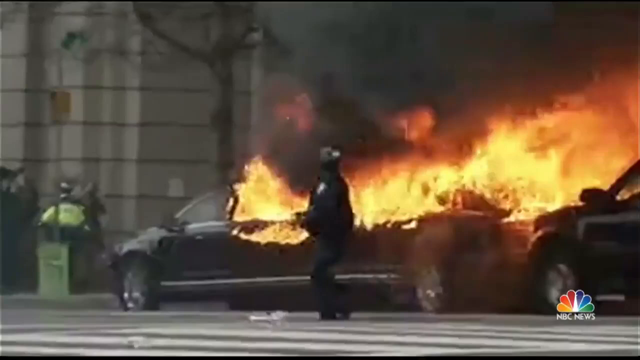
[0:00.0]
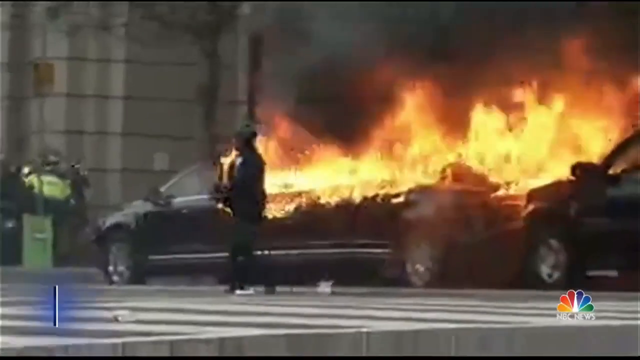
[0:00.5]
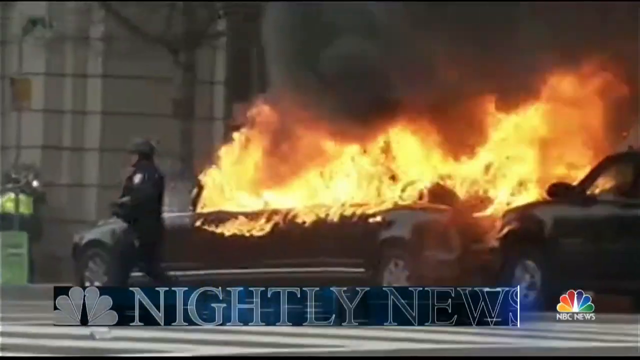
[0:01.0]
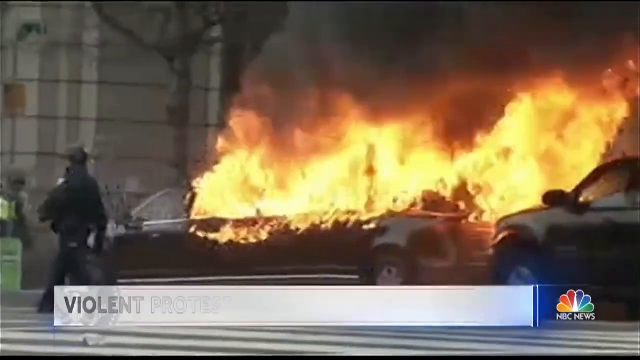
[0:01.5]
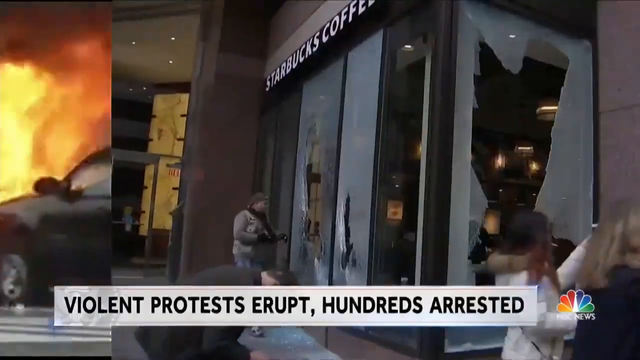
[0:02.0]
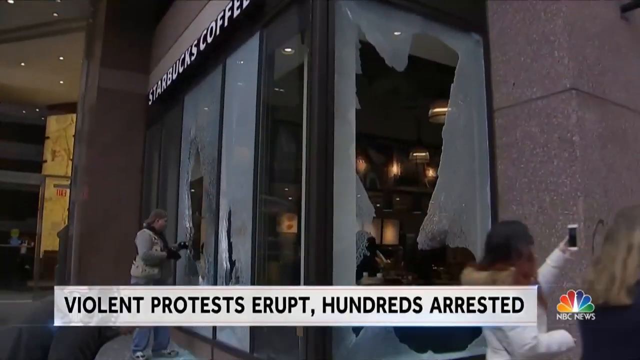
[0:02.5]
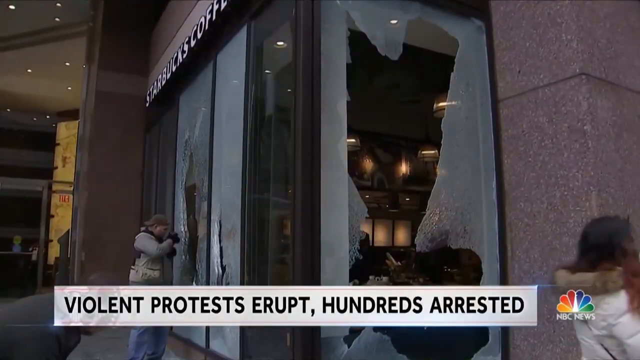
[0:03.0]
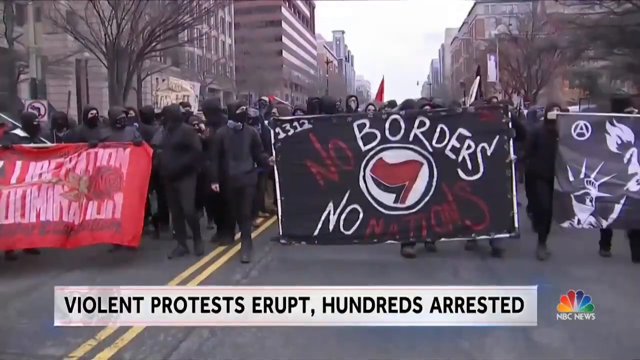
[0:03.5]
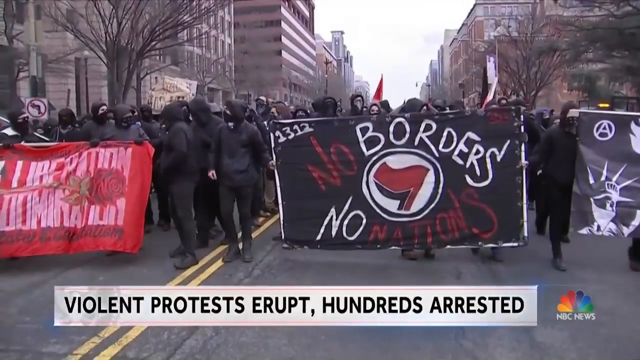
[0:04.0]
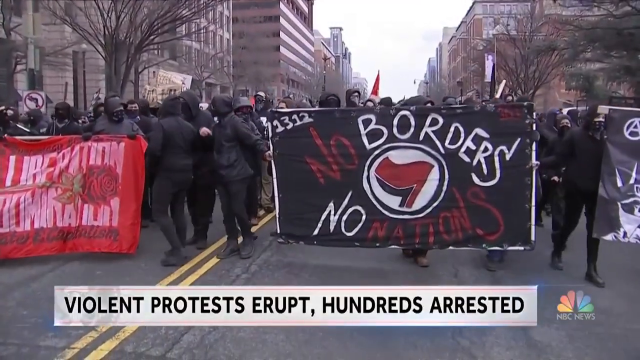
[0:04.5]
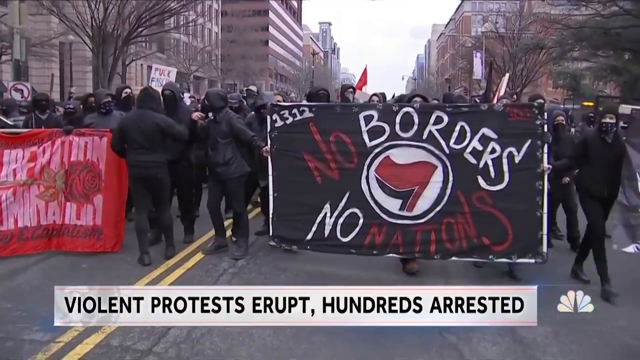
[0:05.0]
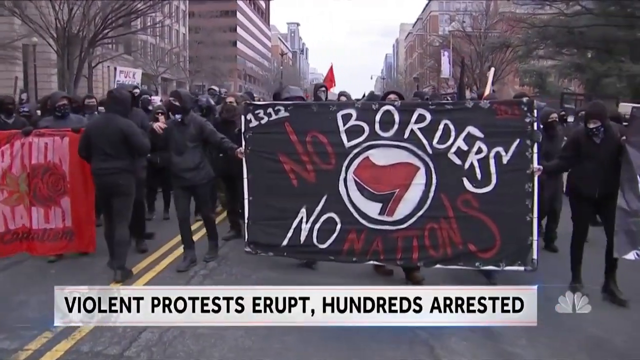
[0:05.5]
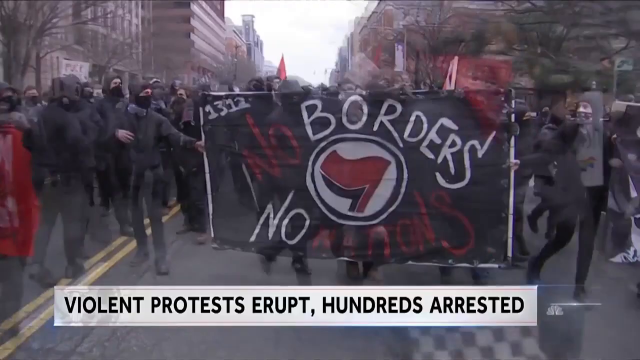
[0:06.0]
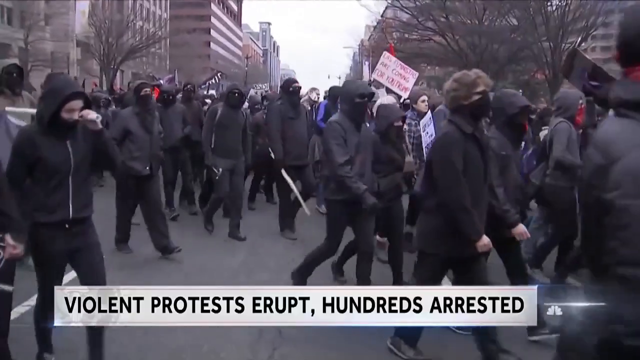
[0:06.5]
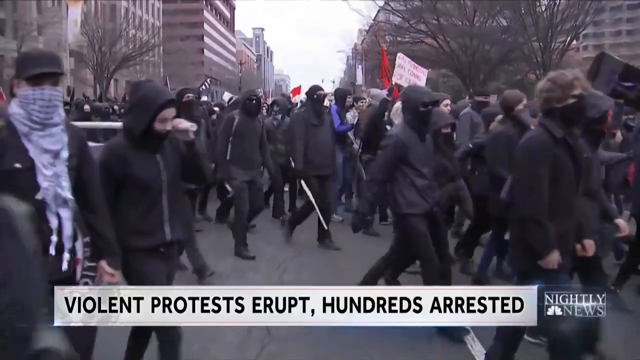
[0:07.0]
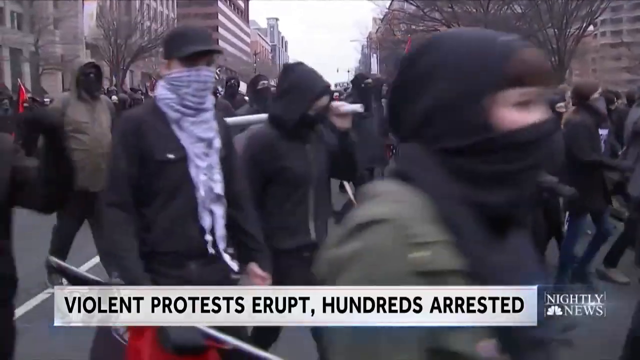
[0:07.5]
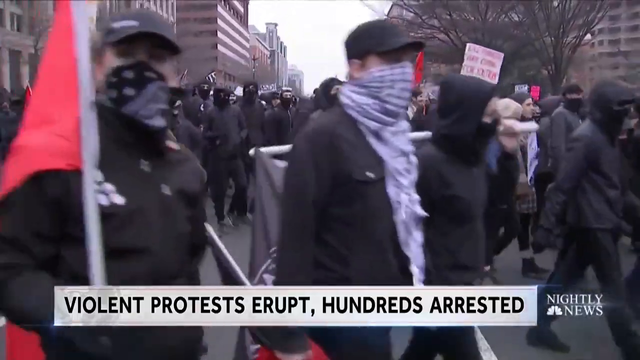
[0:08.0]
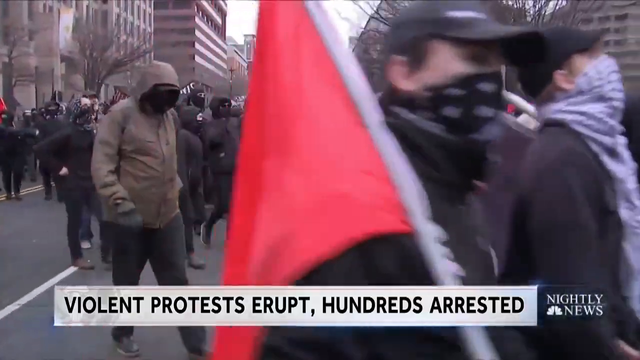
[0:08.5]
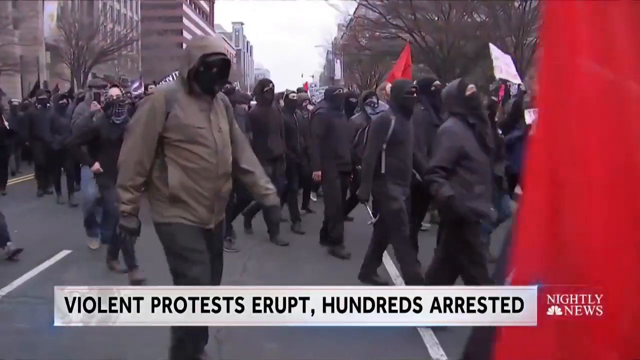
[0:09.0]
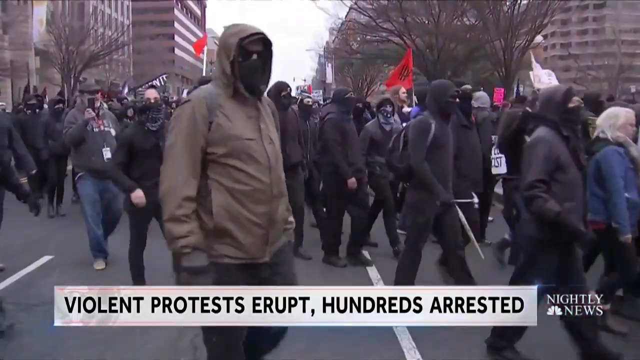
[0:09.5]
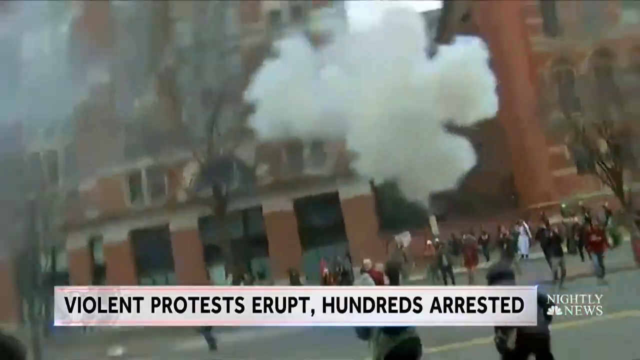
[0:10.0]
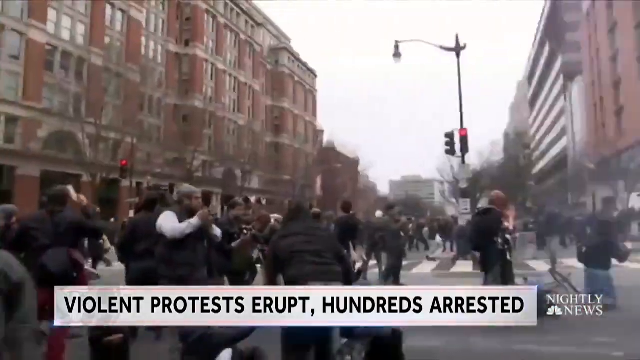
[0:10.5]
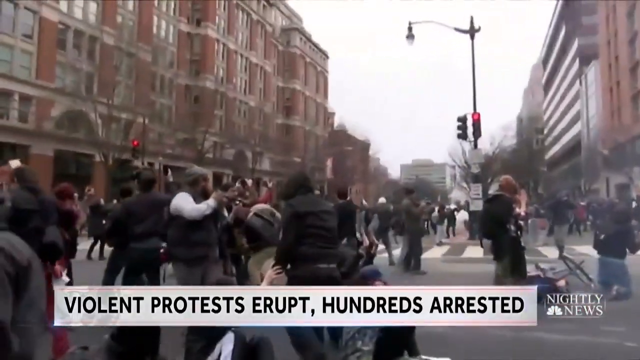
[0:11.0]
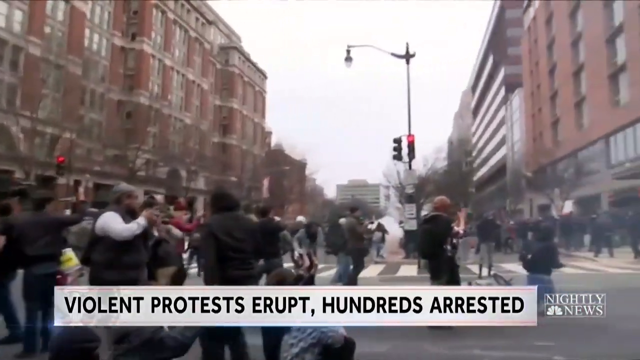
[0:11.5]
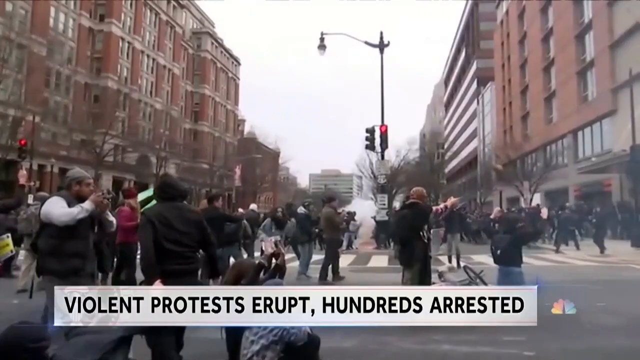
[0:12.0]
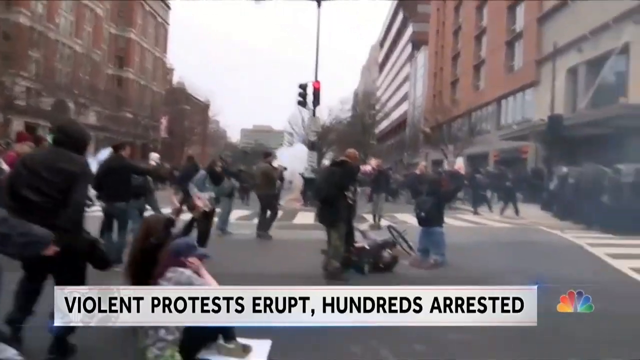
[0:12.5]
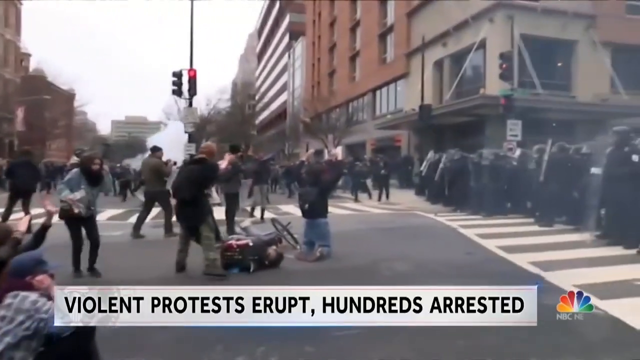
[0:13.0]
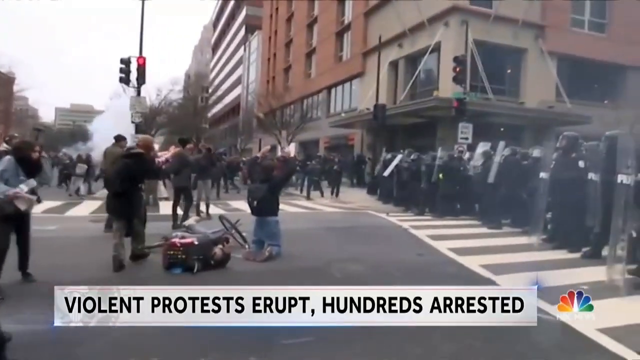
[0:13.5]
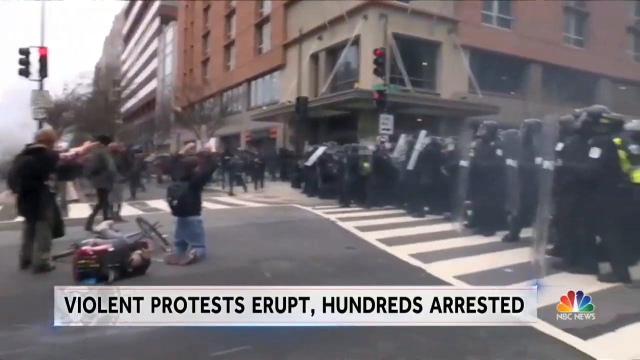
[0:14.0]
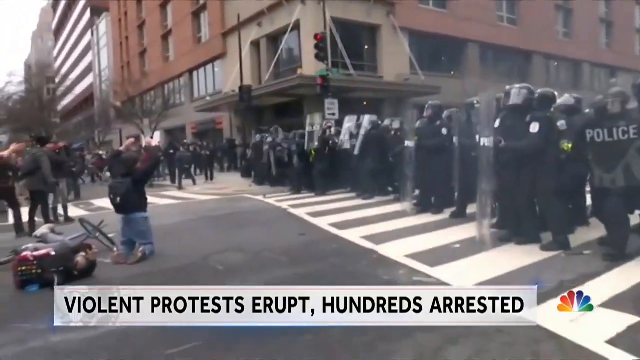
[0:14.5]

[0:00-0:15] Protests erupt in the United States. Large groups of people wearing black walk with flags that read "no borders, no nations"; they seem to be an anarchist group. They are shown breaking the windows of a Starbucks restaurant or coffee shop, marching in unison down the city streets, and confronting the police. Police launch tear gas bombs at the protesters, who wave anarchist flags. A car that has been set on fire is shown burning. The footage is from NBC News: "Nightly News" appears with the NBC logo in the bottom right corner, and the chyron reads "violent protests erupt, hundreds arrested."